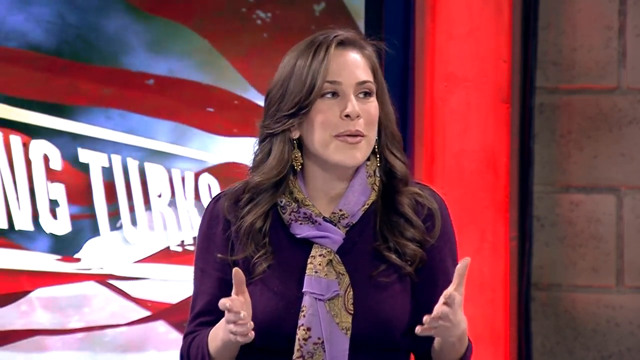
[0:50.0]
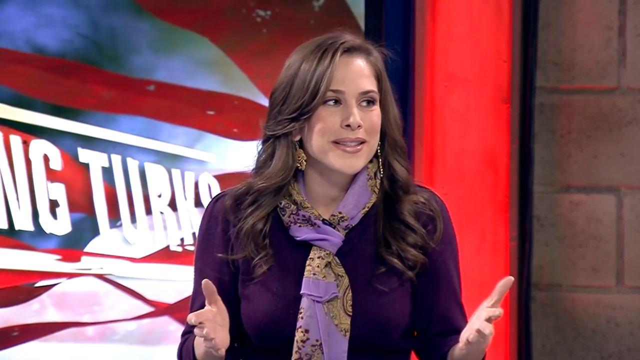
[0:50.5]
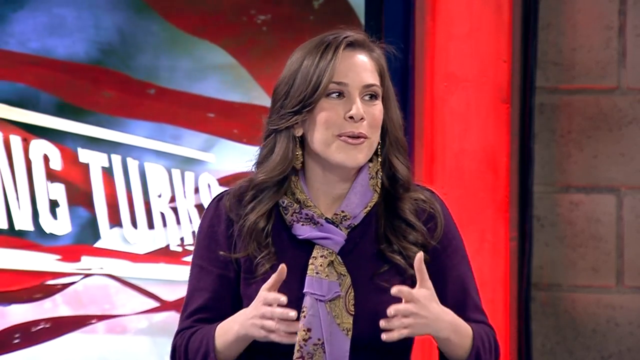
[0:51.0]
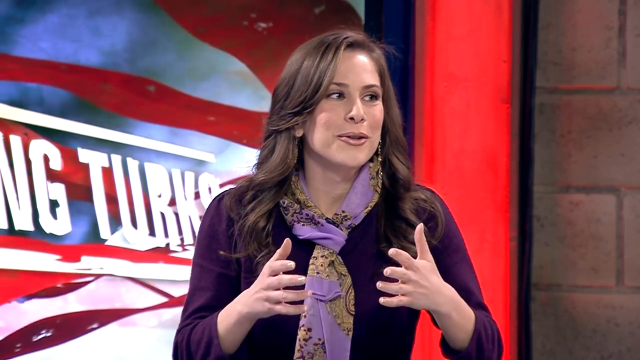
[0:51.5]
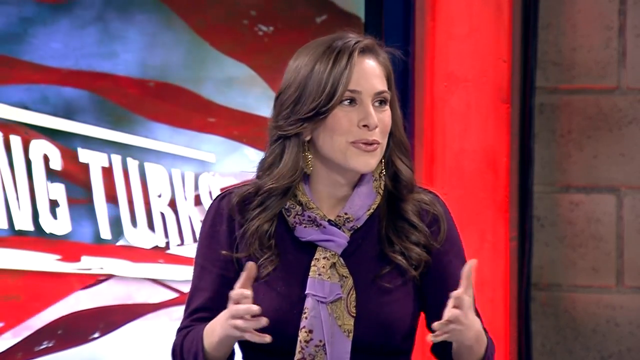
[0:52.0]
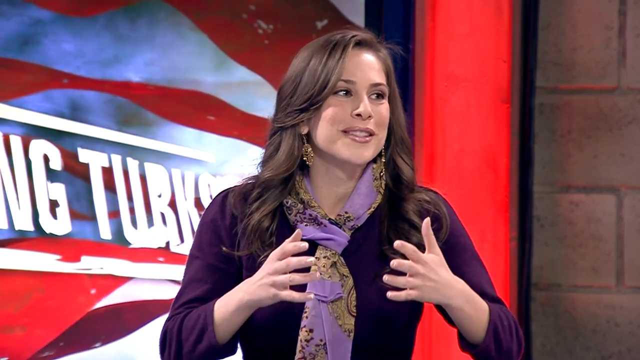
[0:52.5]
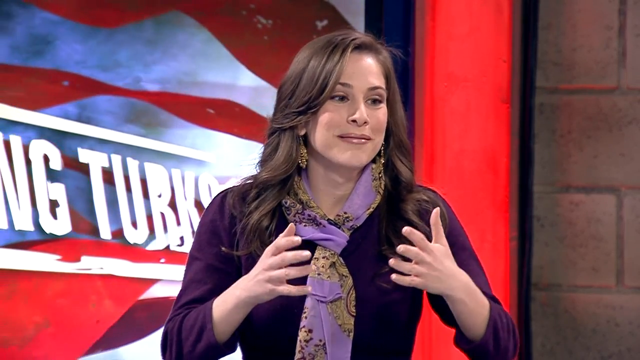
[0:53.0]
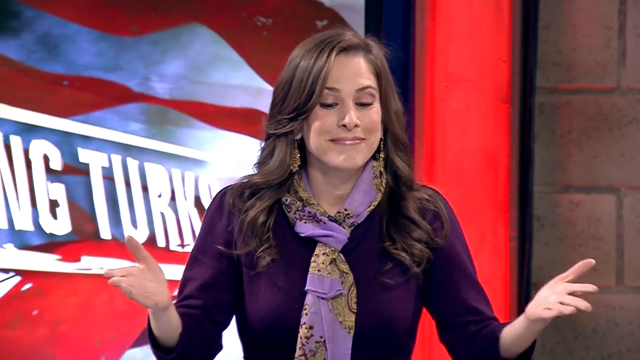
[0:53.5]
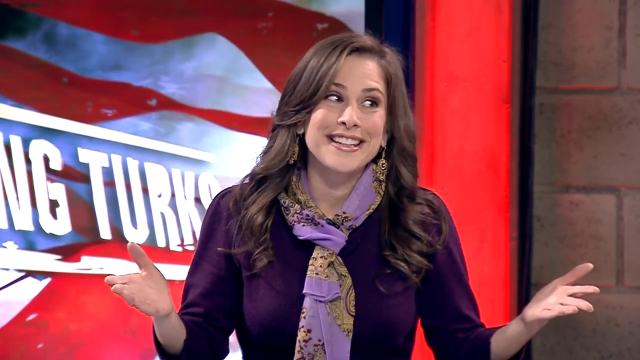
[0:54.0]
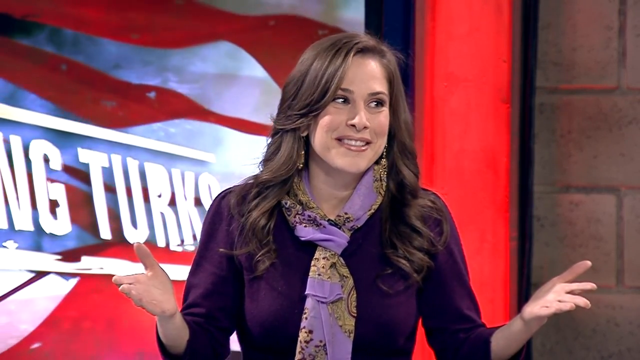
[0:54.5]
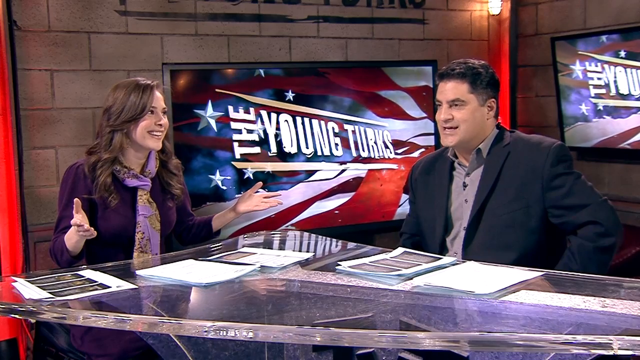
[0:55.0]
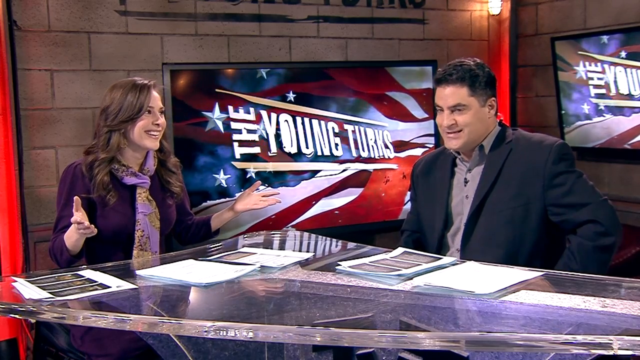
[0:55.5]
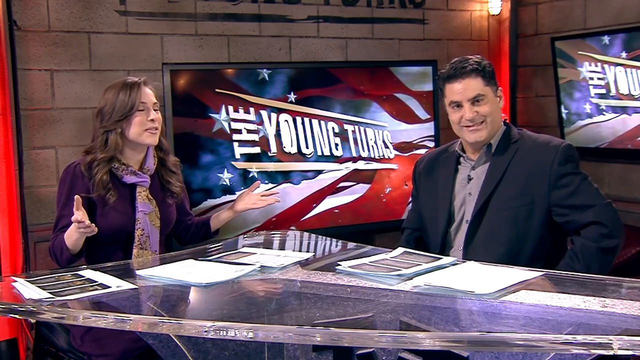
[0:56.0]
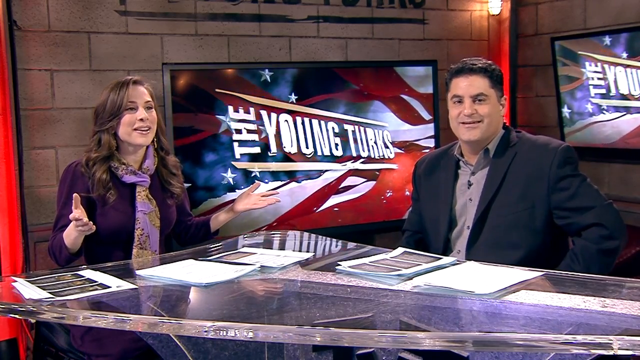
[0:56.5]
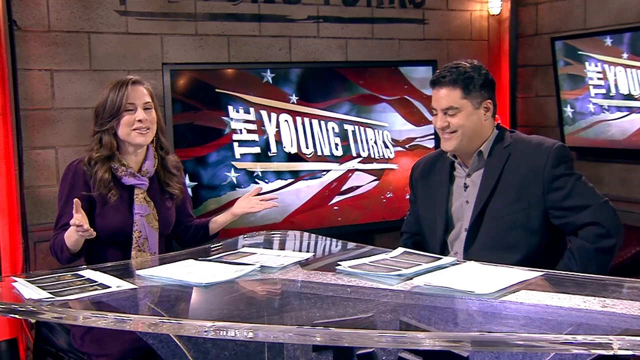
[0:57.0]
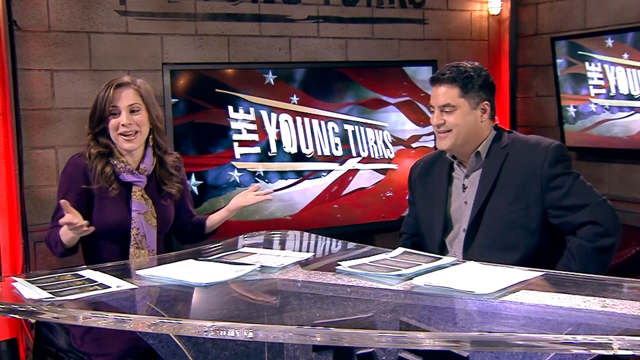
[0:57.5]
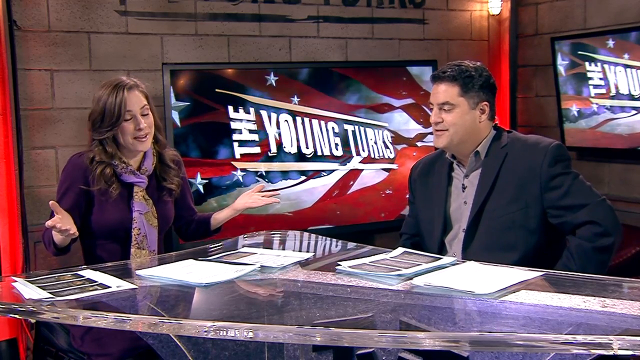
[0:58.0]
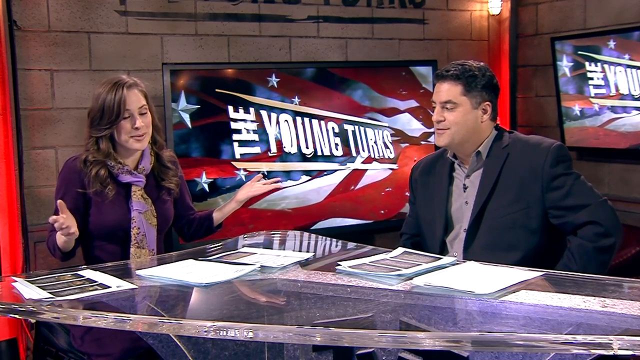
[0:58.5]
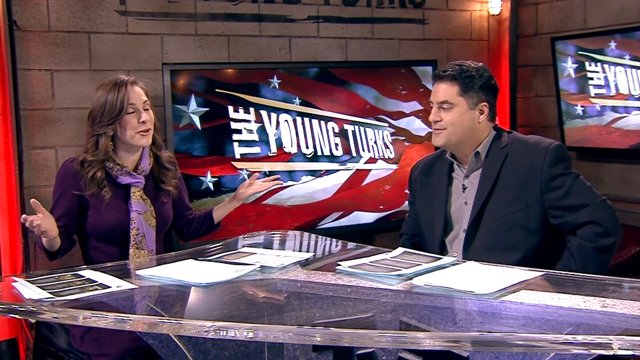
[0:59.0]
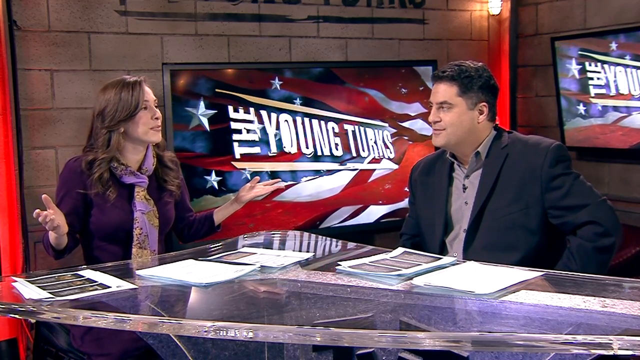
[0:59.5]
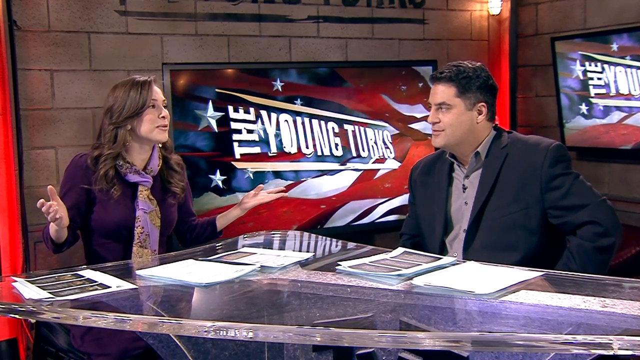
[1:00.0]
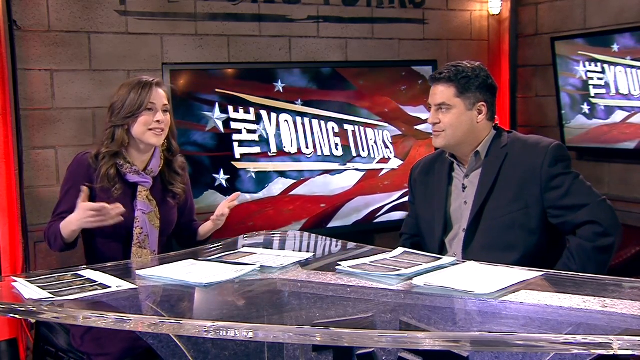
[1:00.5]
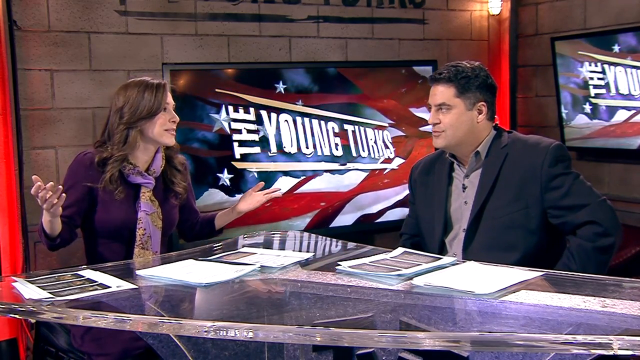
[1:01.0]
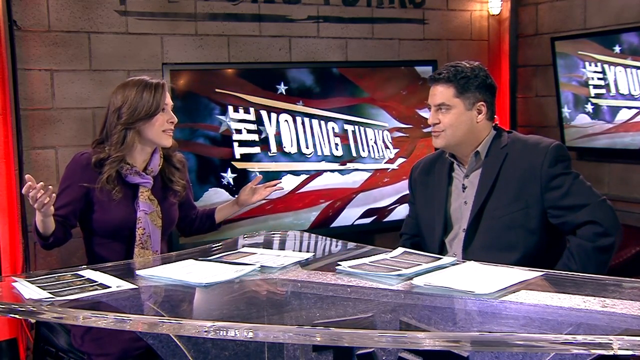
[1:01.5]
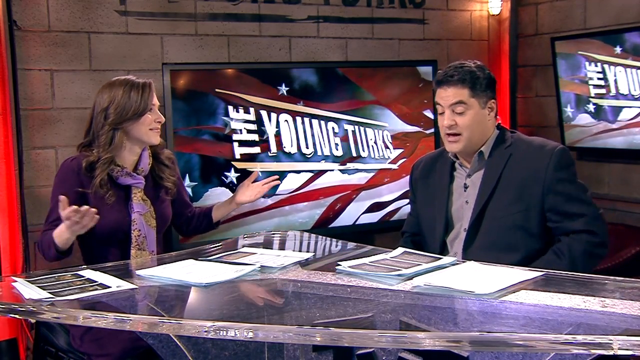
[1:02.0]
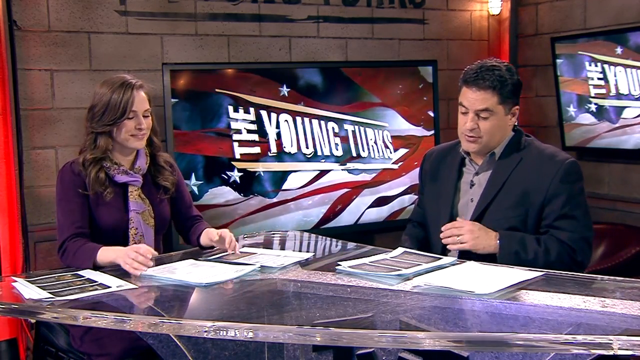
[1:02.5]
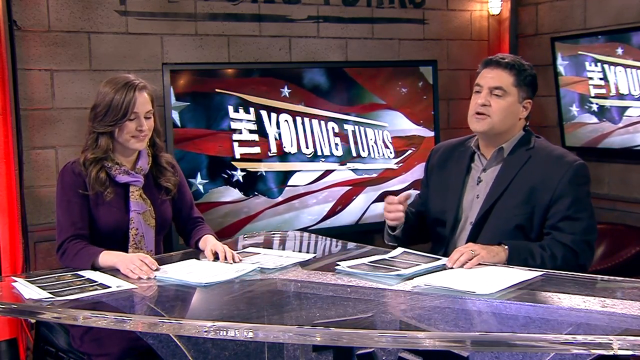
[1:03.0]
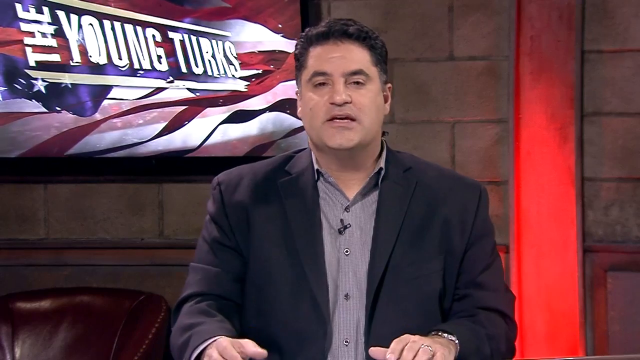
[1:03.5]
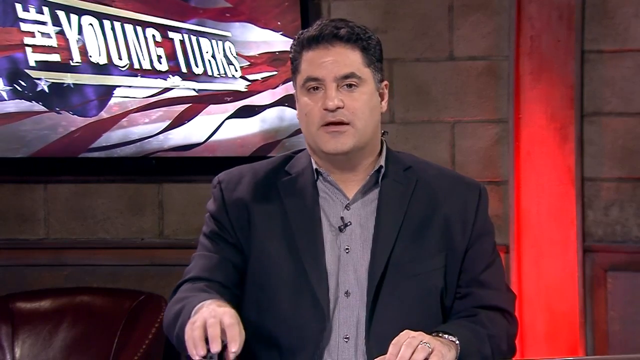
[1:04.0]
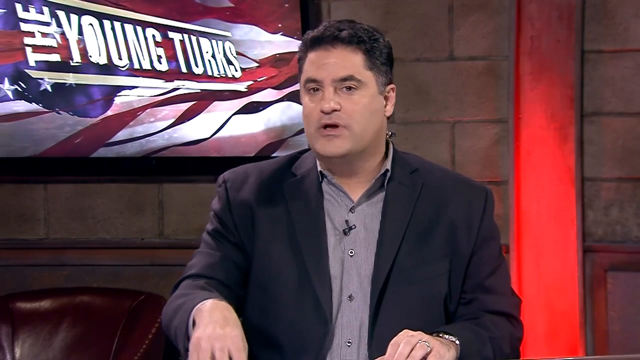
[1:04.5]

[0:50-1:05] The woman in the dark purple sweater with the light purple and gold printed scarf looks over to the side and talks with her hands, seemingly talking to the man in the frame with her. The camera angle changes to show both of them somewhat smiling and laughing as they talk. The man is on the right of the screen, somewhat facing the woman; both appear to be sitting down. He wears a dark blazer jacket of some sort over a light gray button-up shirt and has dark hair. On the table in front of them are papers: two stacks in front of the man and three in front of the woman. The screen then pans to a close-up of just the man, the first one of him, as he is in the middle of talking or making some kind of statement, looking straight at the camera. They appear to be talking about something not too serious and are a bit more animated: the woman is somewhat smirking as she talks, and the man is half-smiling as he looks at her, making a little bit of a face. The exchange seems light-hearted or humorous rather than serious.